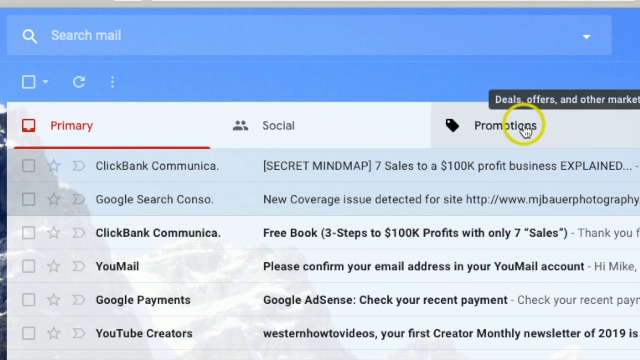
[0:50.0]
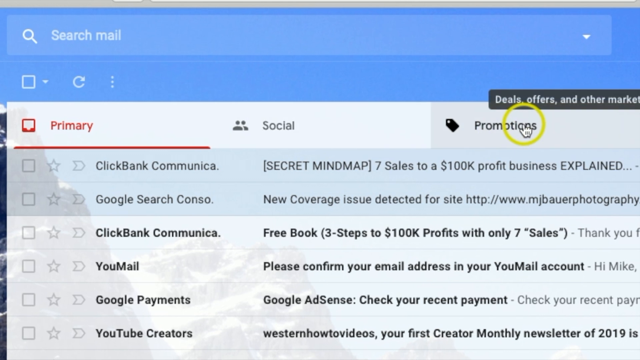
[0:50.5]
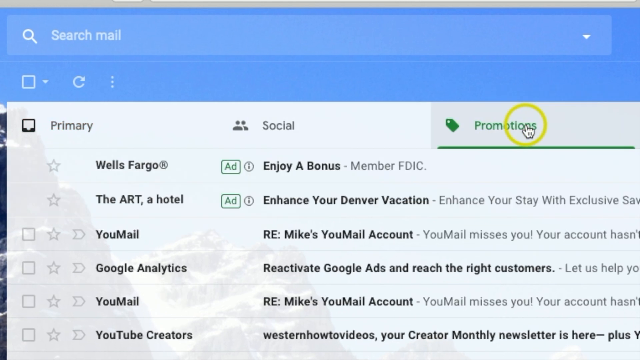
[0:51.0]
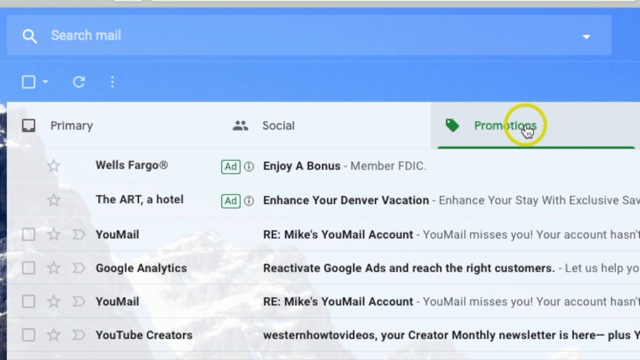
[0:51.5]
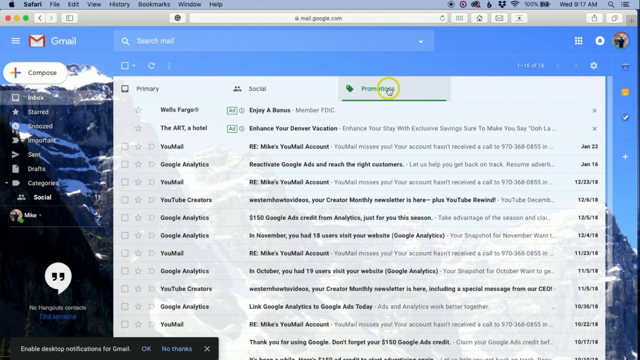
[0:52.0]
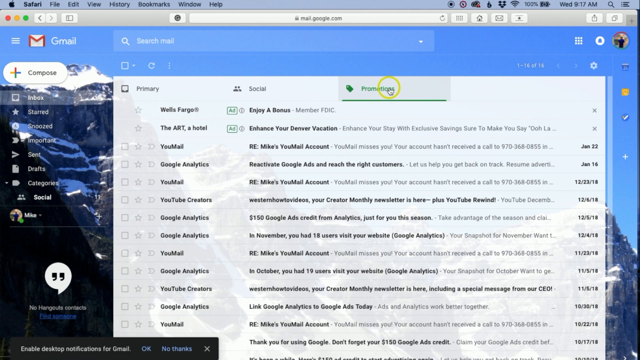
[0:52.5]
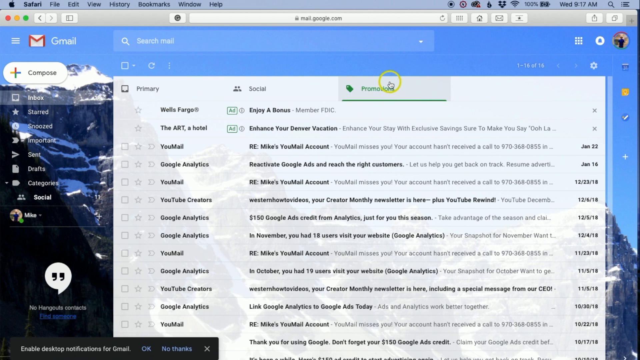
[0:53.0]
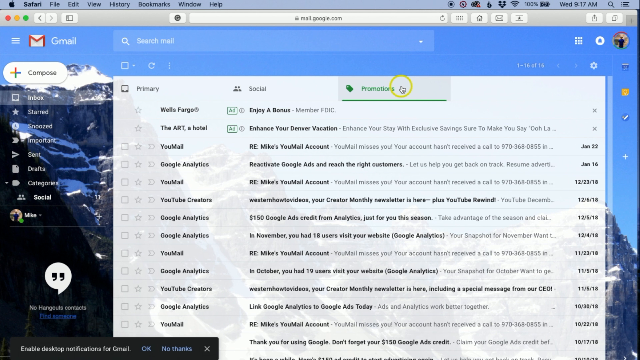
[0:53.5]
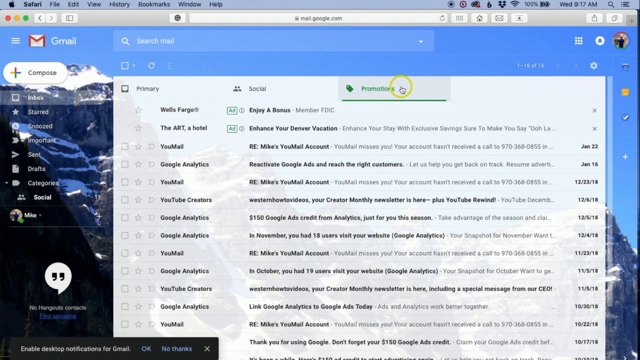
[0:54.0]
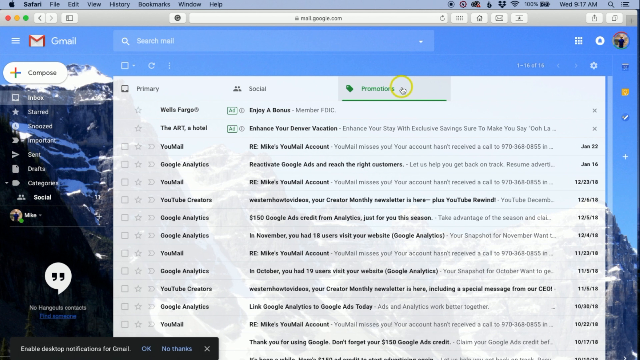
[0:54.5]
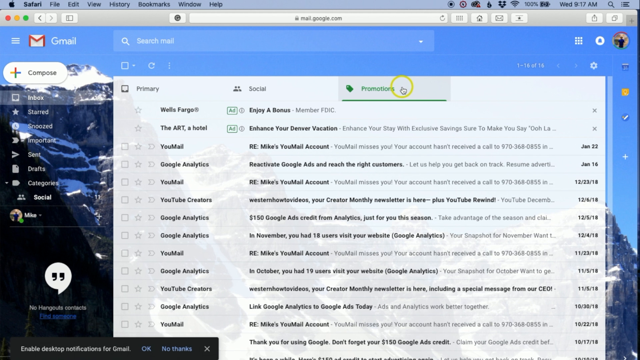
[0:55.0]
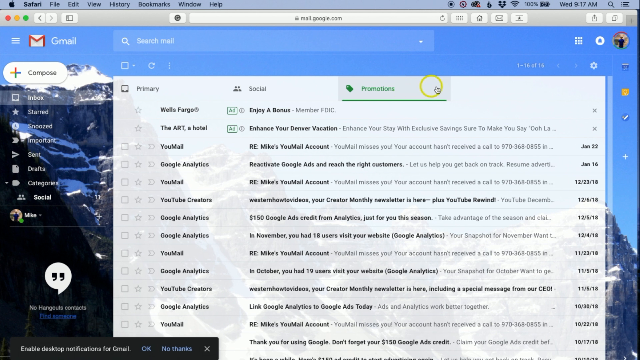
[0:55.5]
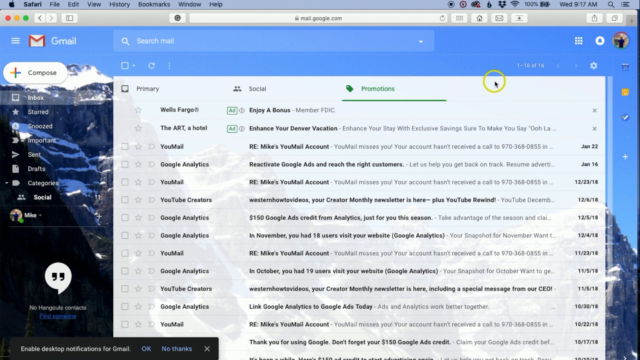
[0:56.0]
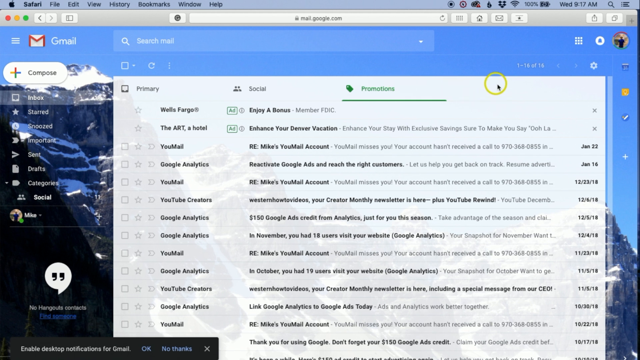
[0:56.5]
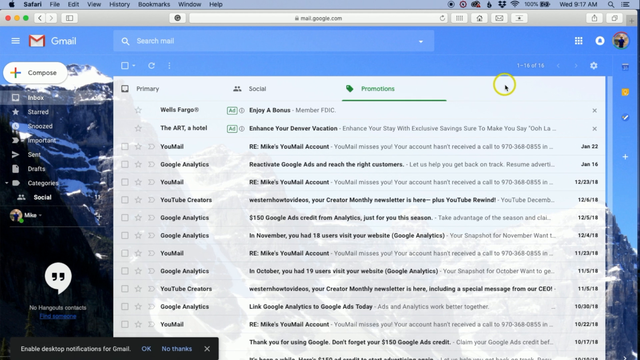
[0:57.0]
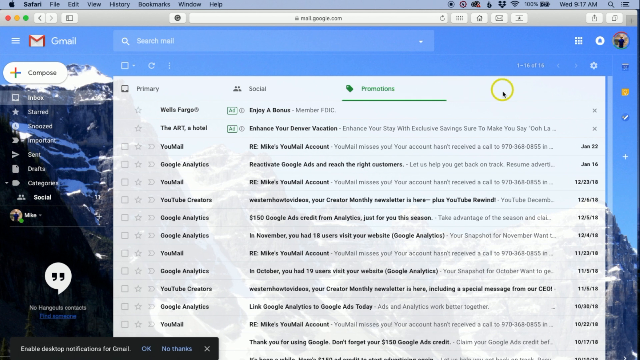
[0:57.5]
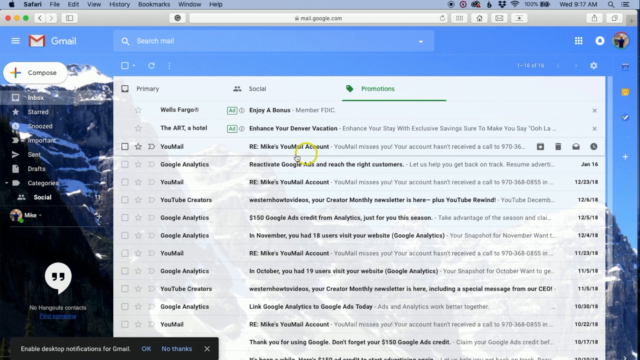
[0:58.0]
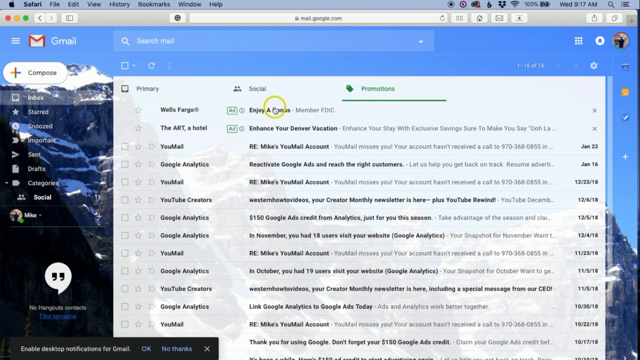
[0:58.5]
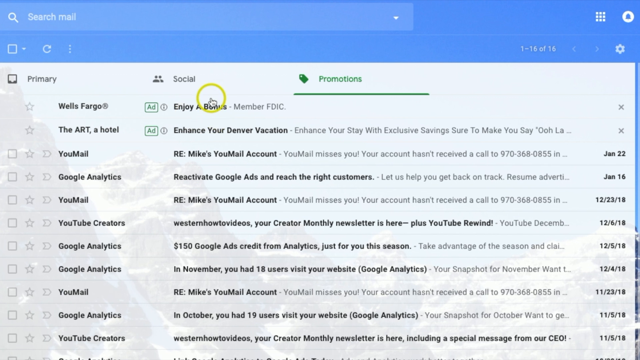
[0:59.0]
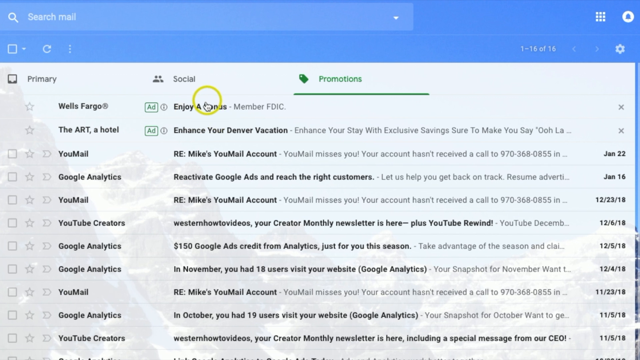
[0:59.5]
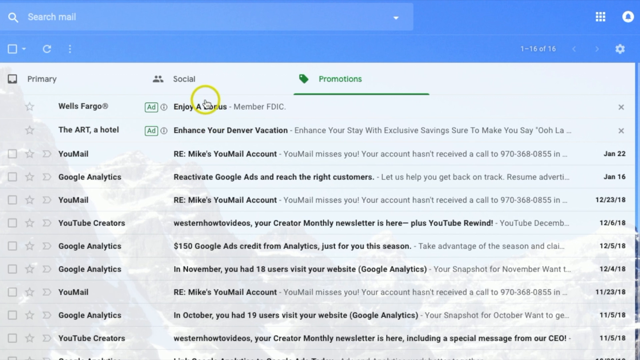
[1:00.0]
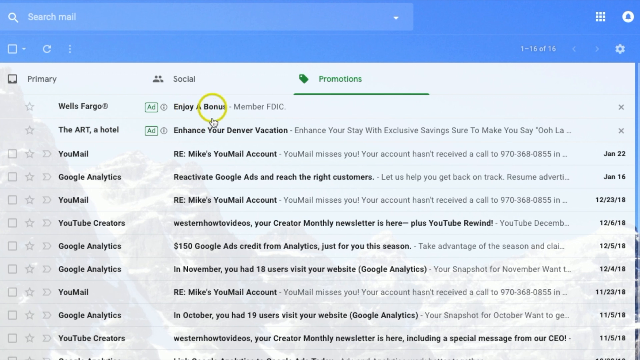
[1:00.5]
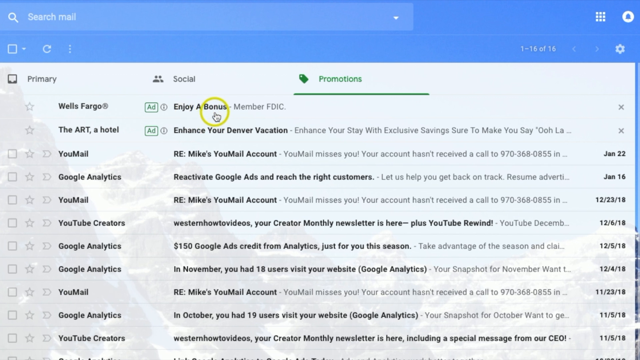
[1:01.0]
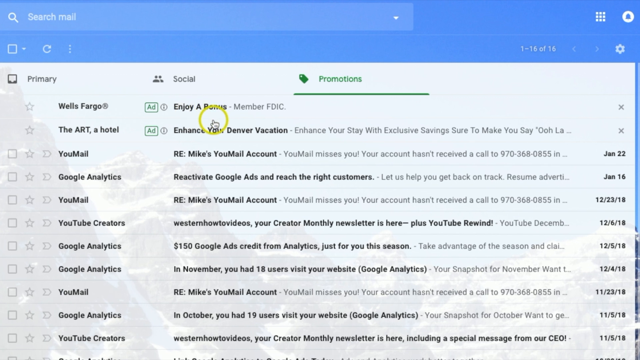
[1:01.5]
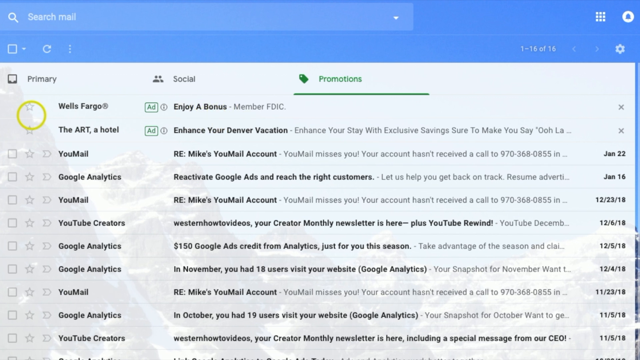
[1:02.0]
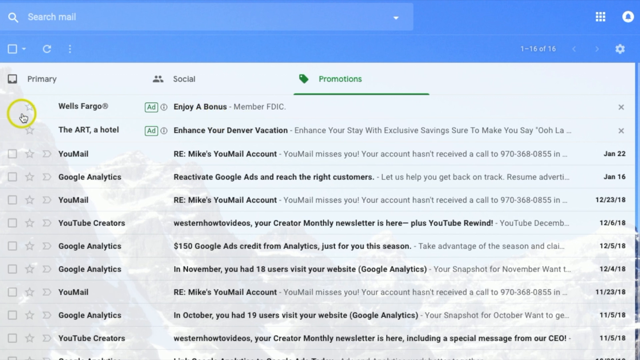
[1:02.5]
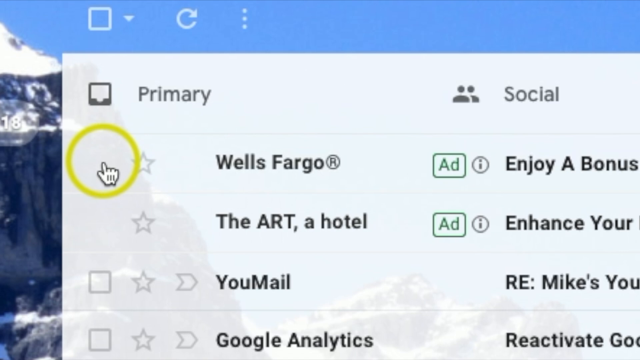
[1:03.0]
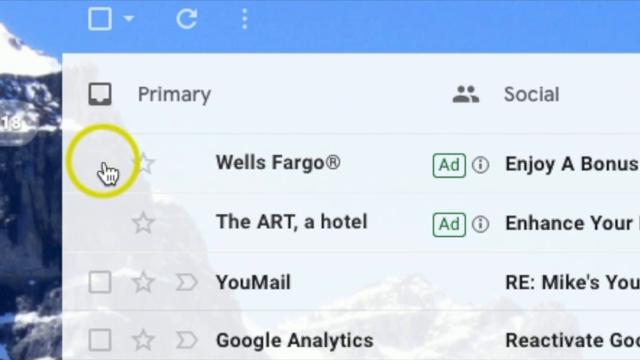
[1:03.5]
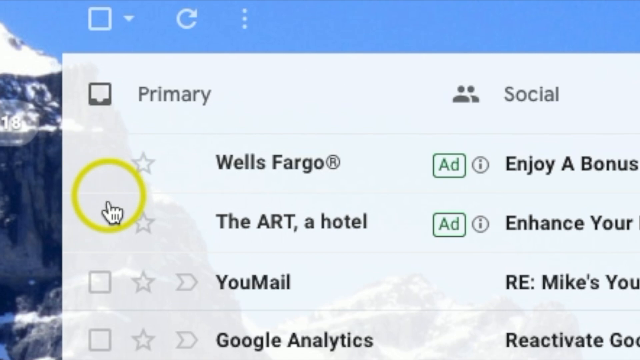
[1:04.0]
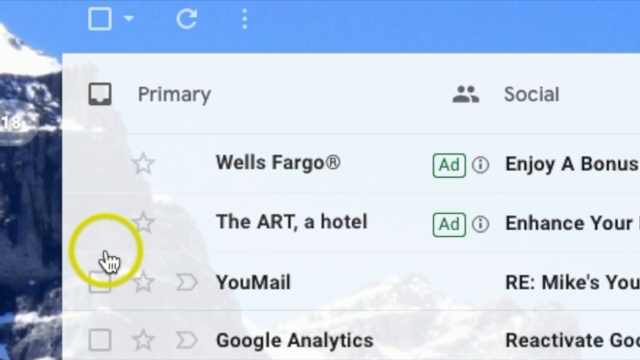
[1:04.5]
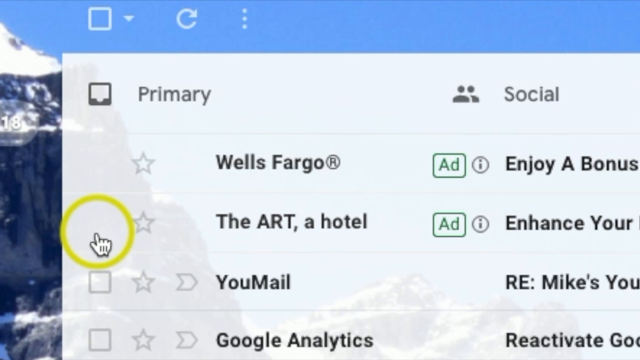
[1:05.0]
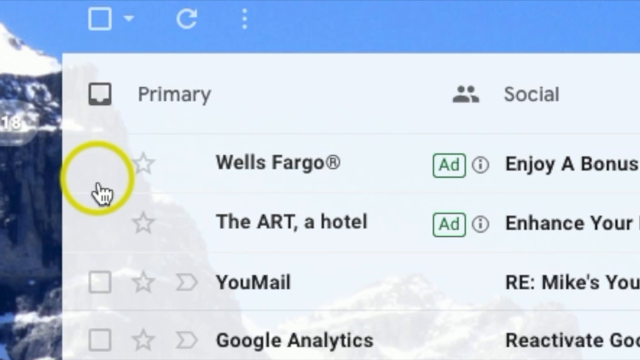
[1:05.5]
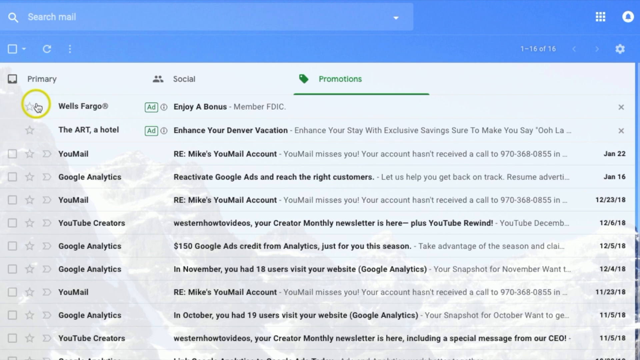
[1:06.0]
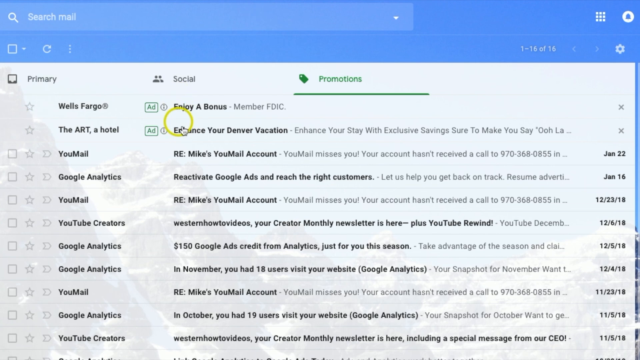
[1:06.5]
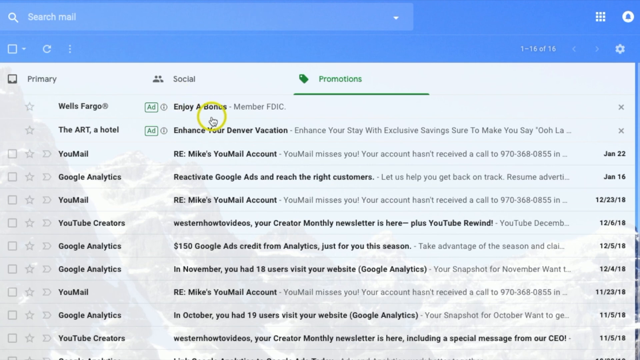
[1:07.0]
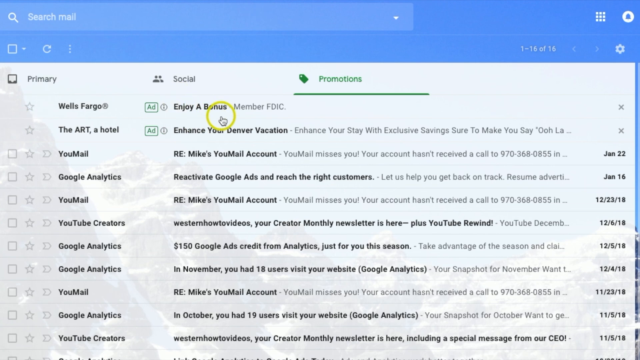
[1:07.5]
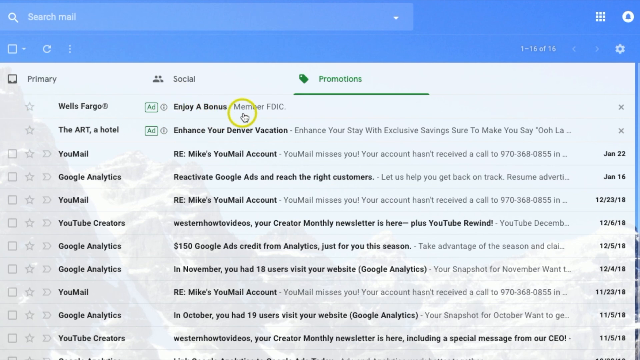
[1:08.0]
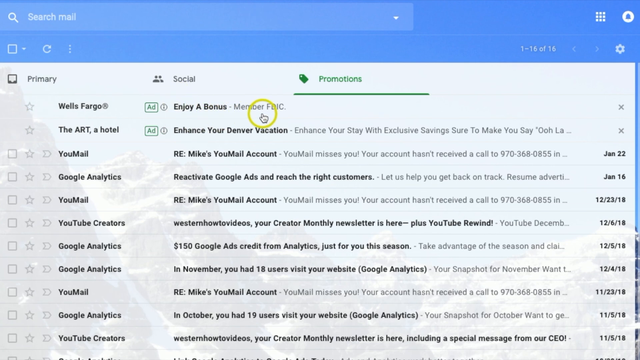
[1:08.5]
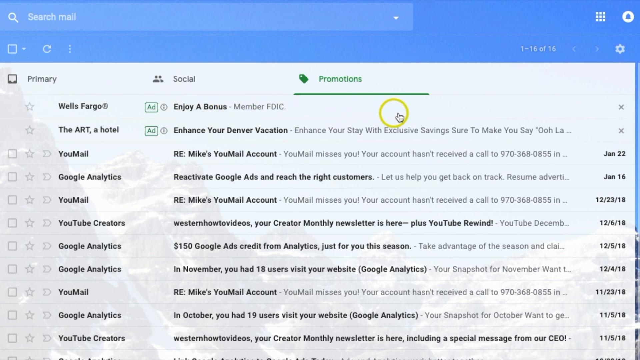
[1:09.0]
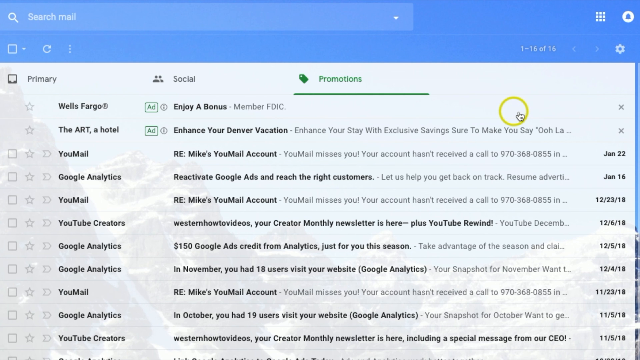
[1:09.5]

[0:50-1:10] The cursor moves over, the page scrolls down, and the cursor hovers over an item showing the text "Wells Fargo. Enjoy bonus, member FDIC." Hovering over another shows "the art of town. Enhance your Denver vacation. Enhance your stay with exclusive saving, sure to make you say, ooh". On the left there appears to be a star, and the cursor moves to the next star, circles around these, and moves all the way over to the right. There are different kinds of emails, including ones from Google Analytics and YouTube Creators. The background is kind of like a snowy mountainside. Examples include Mike's email account and "$150 Google Ads credit" from Analytics, "just for you this season, take advantage of the season". All of the emails are from 2018, some from January, December, November and October.